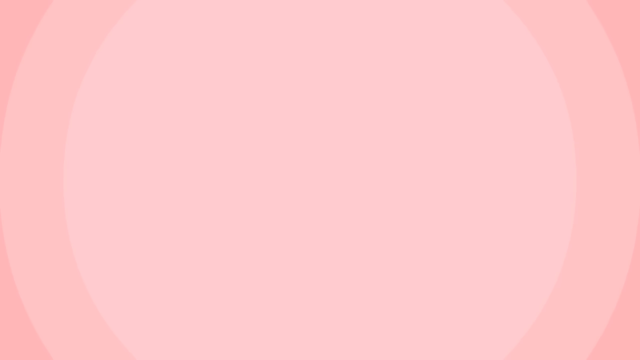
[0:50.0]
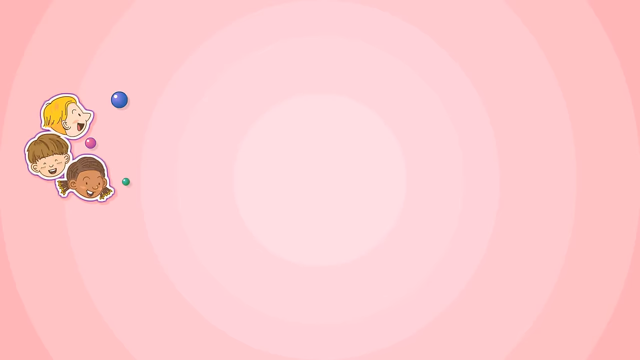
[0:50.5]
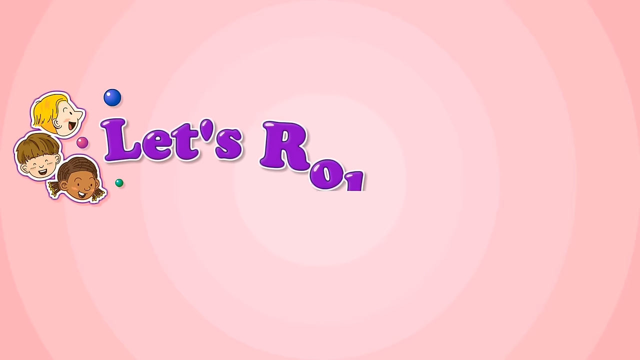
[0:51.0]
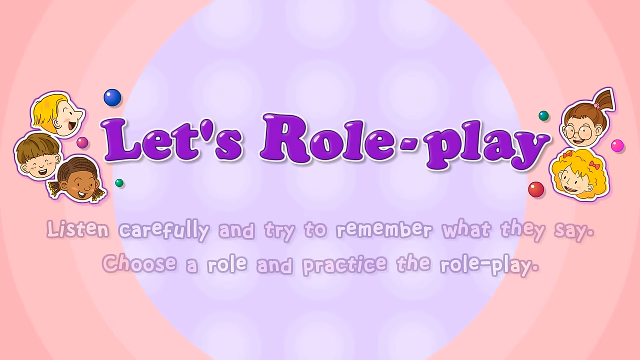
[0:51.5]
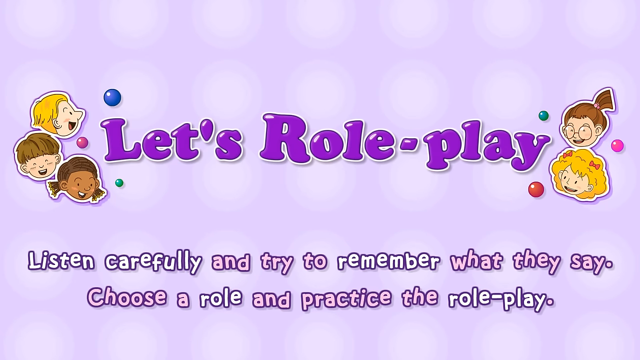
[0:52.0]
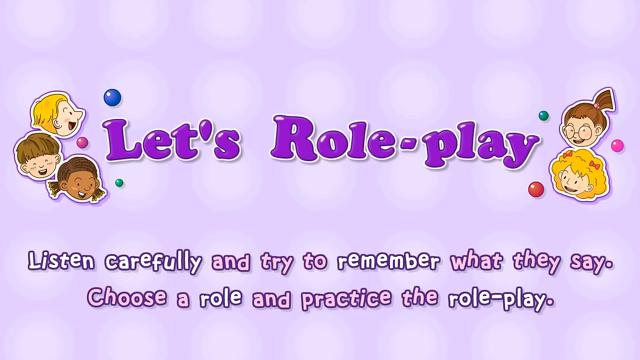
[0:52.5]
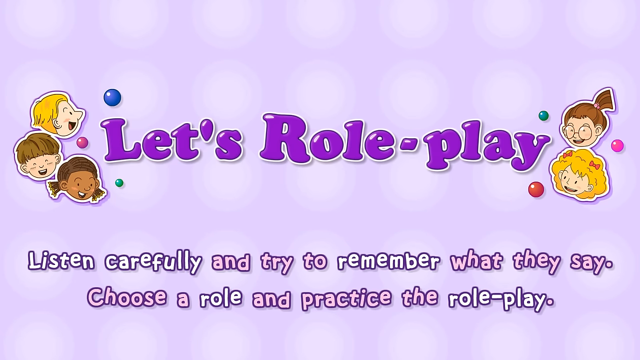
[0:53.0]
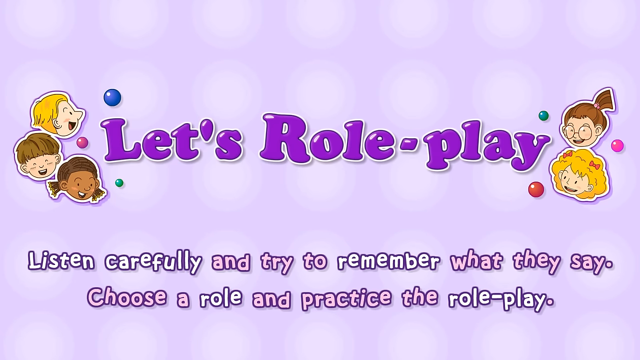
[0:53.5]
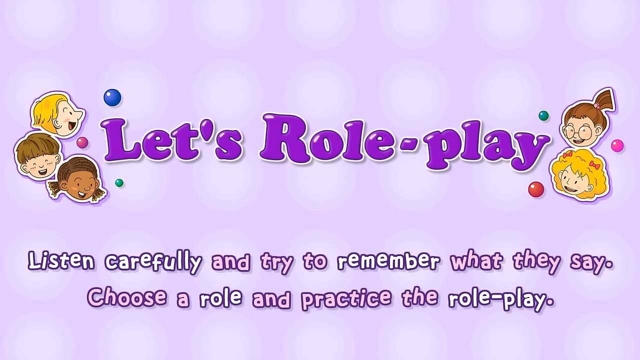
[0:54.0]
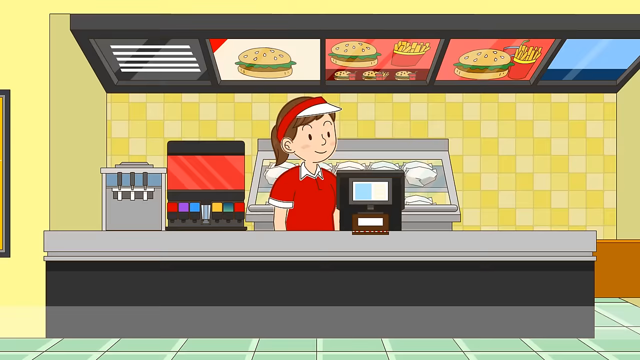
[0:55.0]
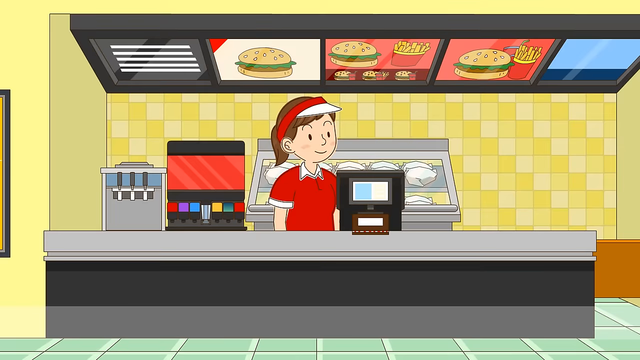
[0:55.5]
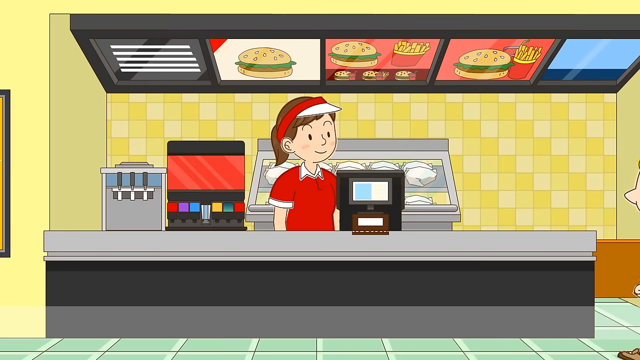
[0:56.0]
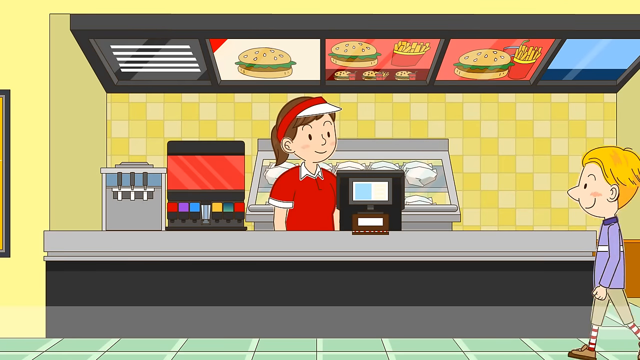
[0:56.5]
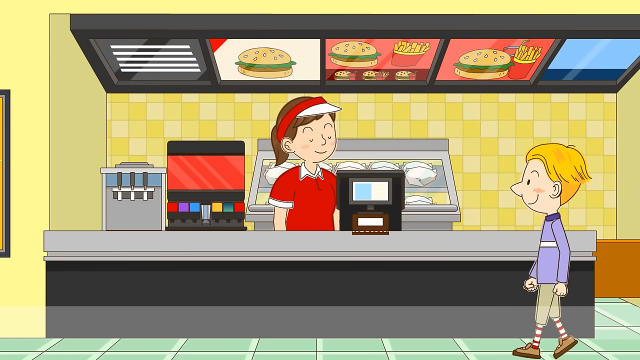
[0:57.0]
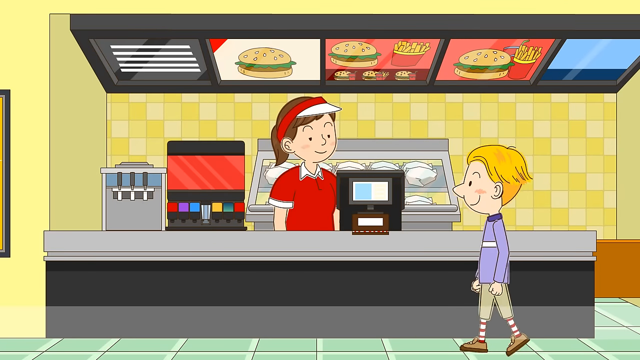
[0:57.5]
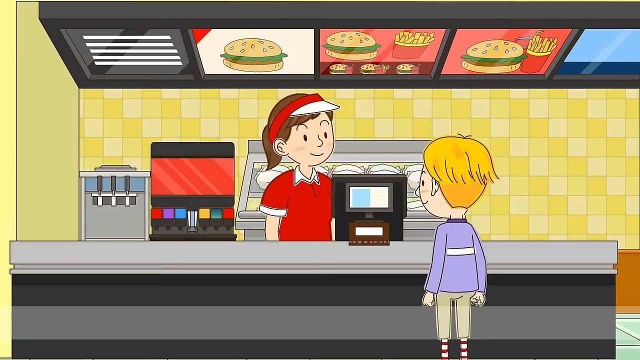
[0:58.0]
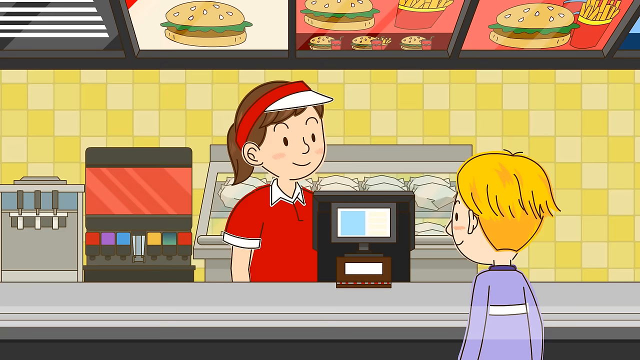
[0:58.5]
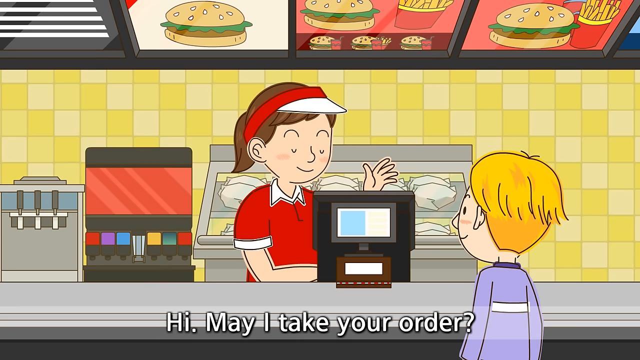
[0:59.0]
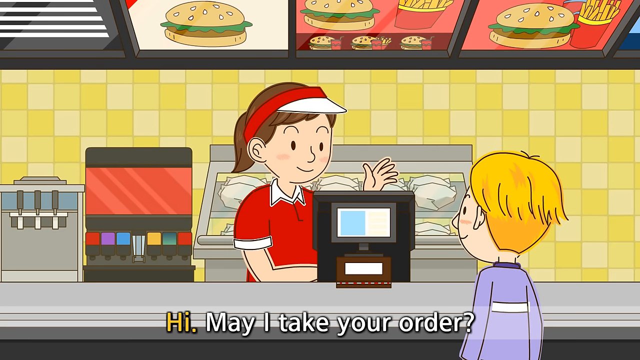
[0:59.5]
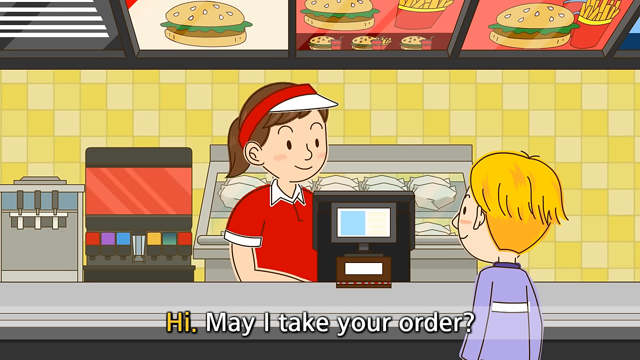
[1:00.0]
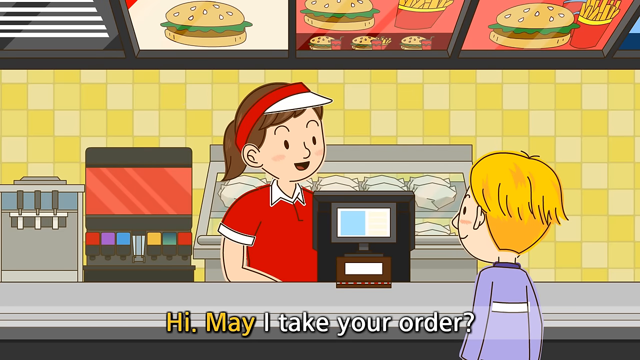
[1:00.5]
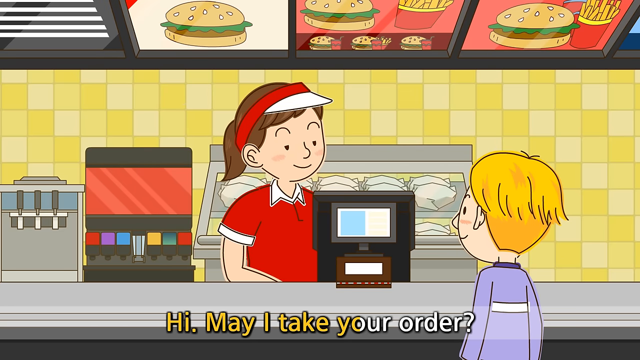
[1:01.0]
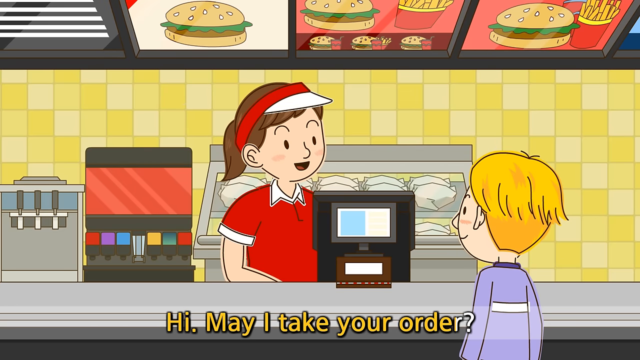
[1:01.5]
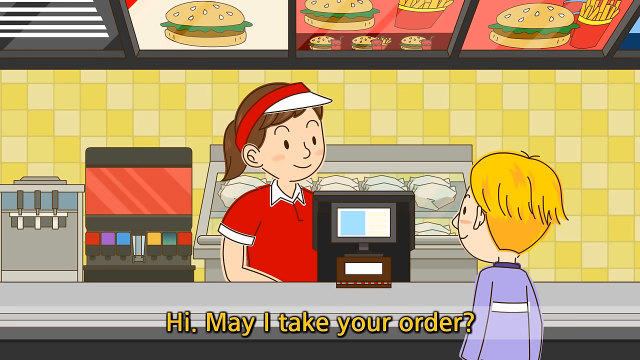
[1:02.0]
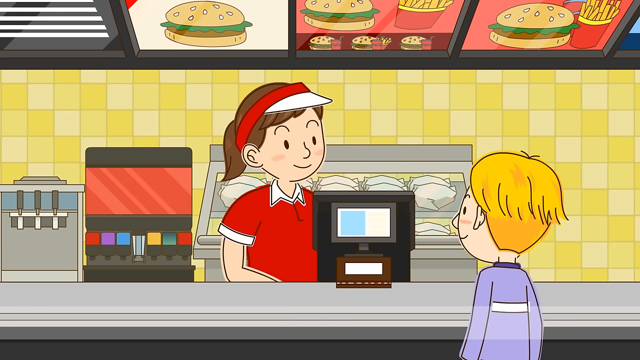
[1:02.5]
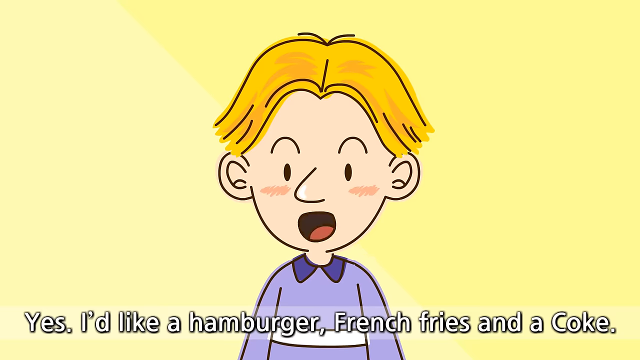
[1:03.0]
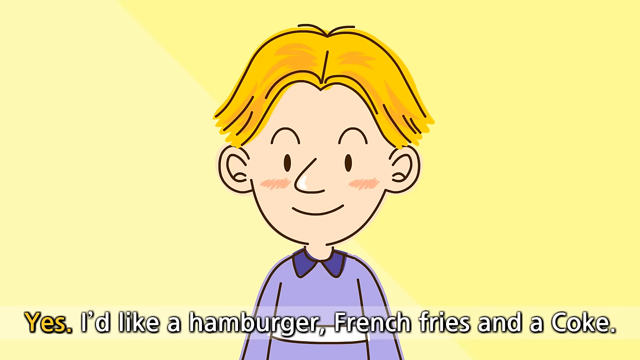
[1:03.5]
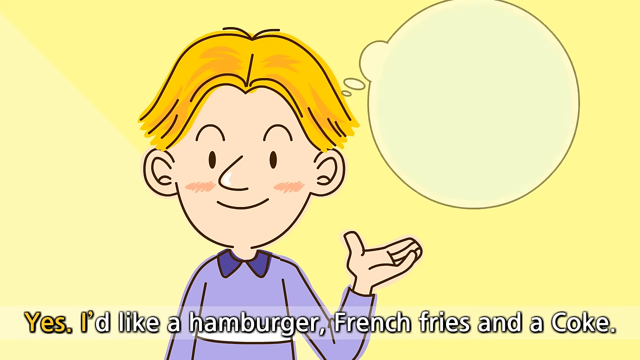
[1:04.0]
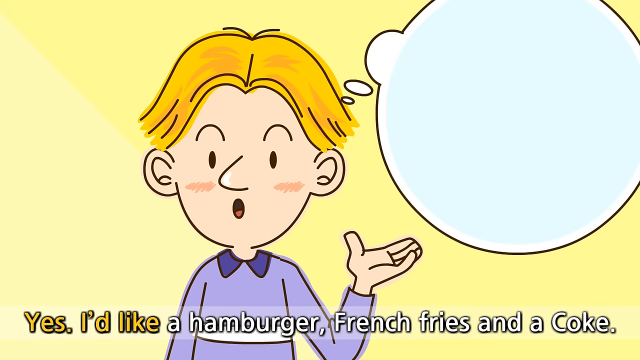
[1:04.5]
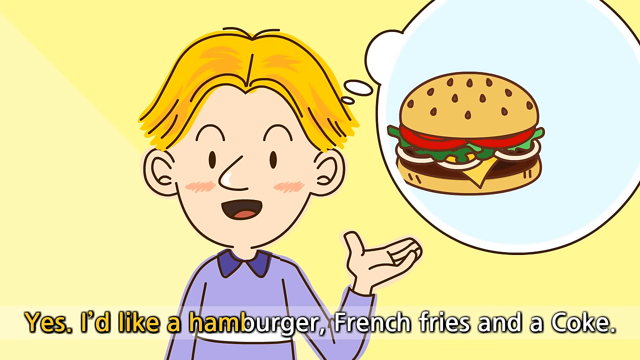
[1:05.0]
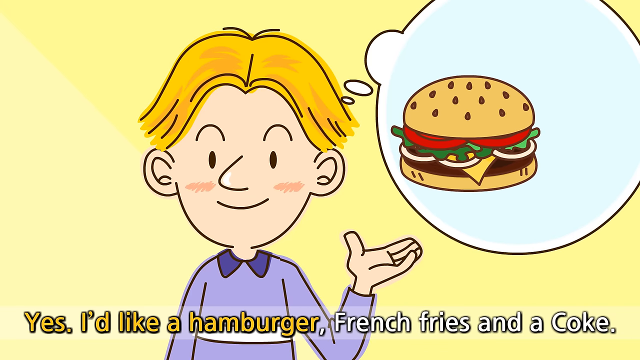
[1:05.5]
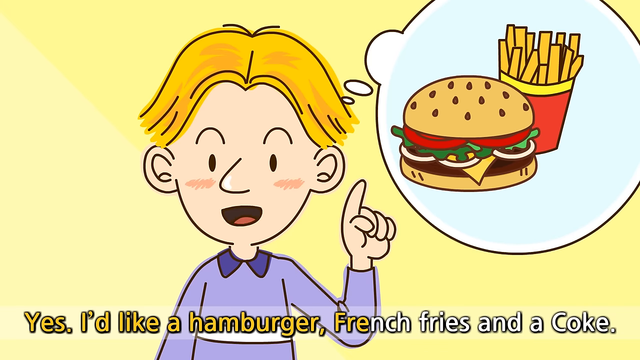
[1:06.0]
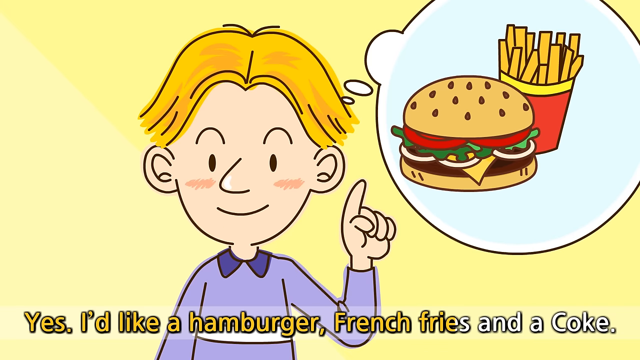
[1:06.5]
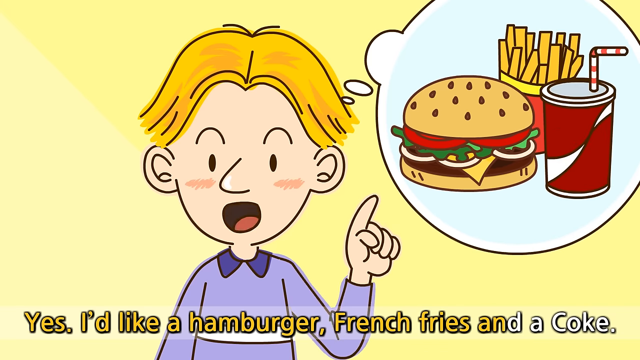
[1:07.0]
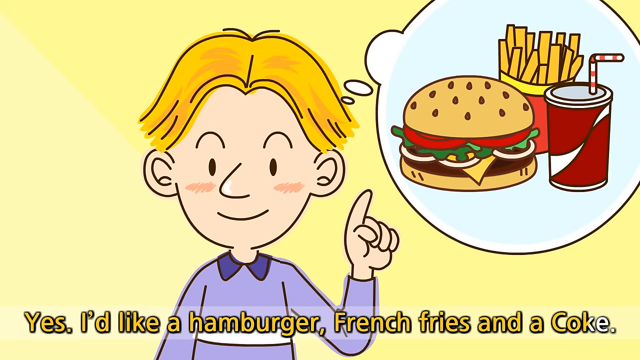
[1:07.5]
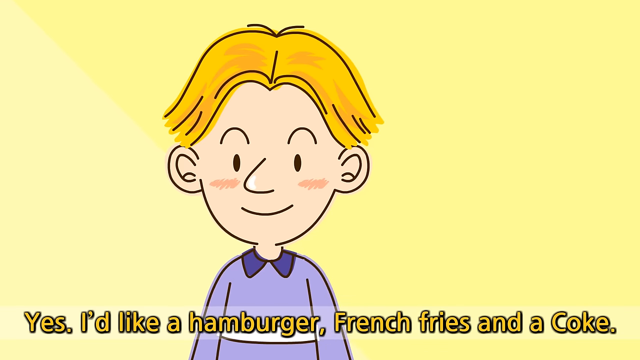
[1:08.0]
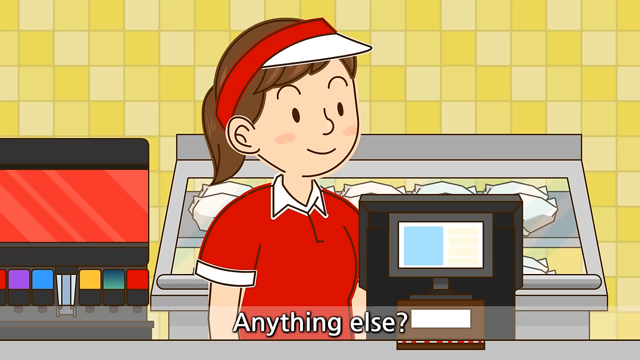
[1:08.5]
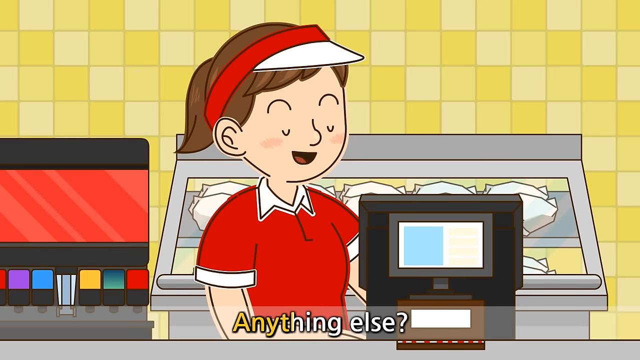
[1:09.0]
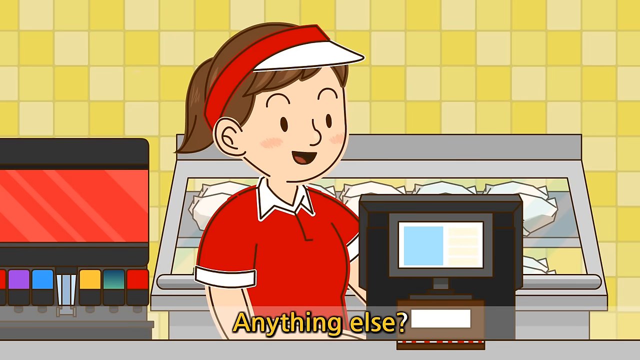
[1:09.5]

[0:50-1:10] The whole background is pink with purple text reading "let's role play. Listen carefully and try to remember what they say. Choose a role and practice the role play." The scene then cuts to the girl pretending to take an order from the boy. She asks what he wants, and he gives a picture while saying he wants a hamburger, french fries and a Coke. In this short role play, one of them is the worker and the other is the customer. The wall behind them has a kind of checkerboard pattern in lighter and darker yellow. The boy wears a green shirt, though from the back his shirt is purple, and the girl wears a red shirt.